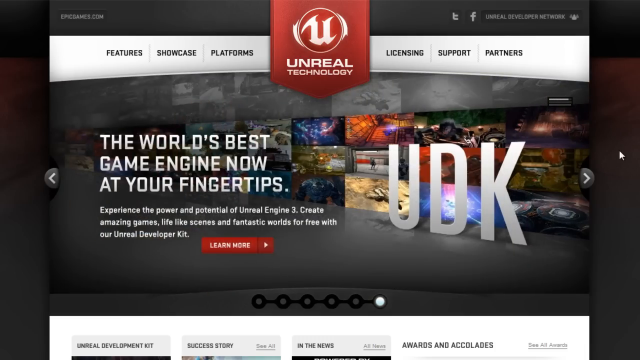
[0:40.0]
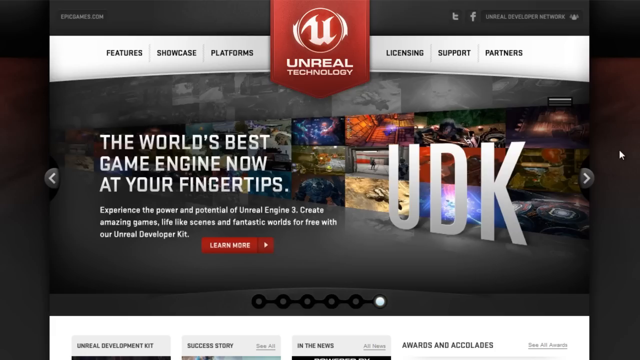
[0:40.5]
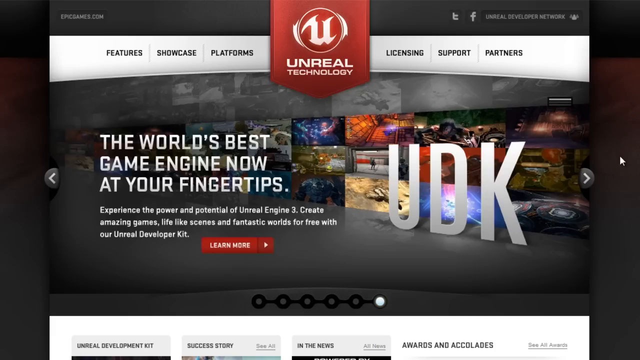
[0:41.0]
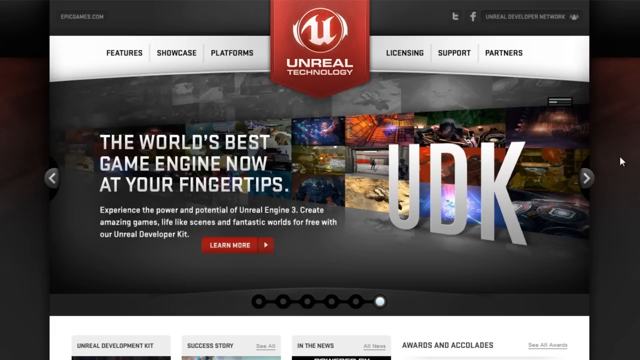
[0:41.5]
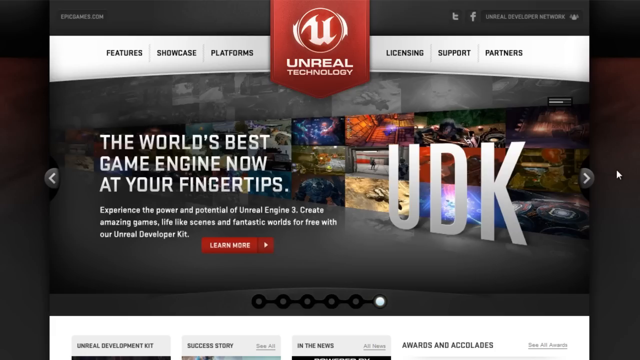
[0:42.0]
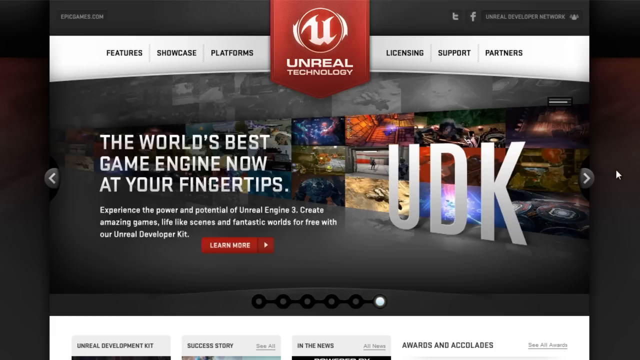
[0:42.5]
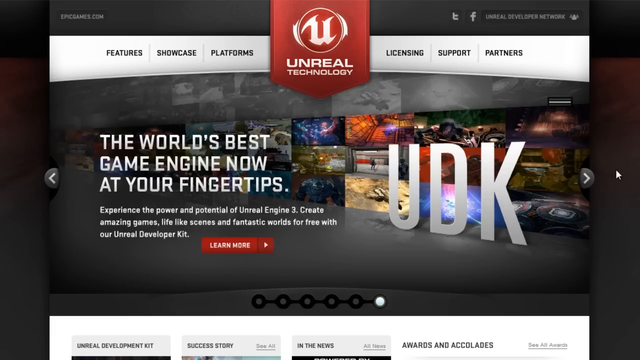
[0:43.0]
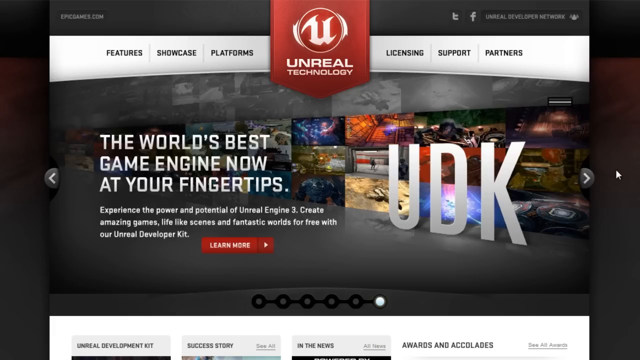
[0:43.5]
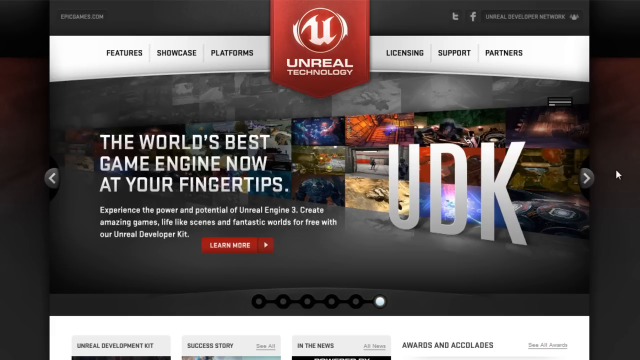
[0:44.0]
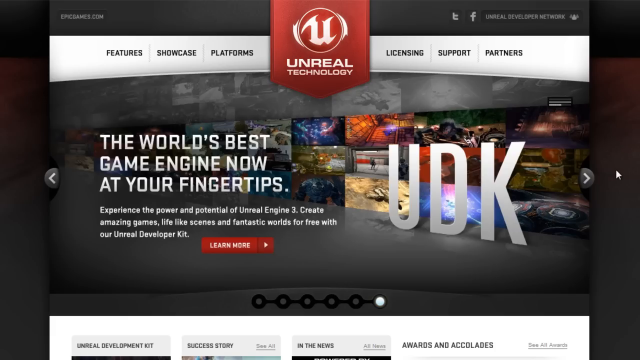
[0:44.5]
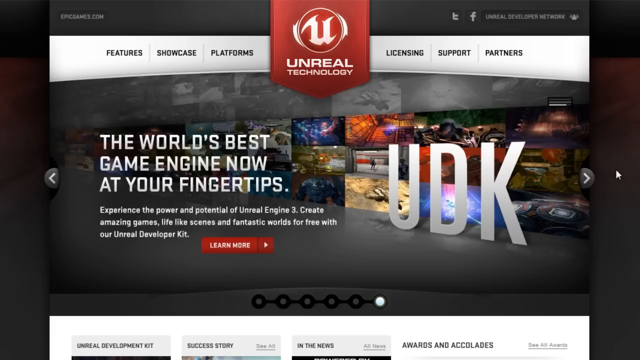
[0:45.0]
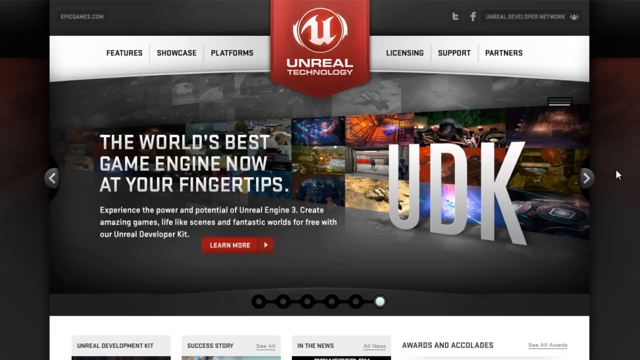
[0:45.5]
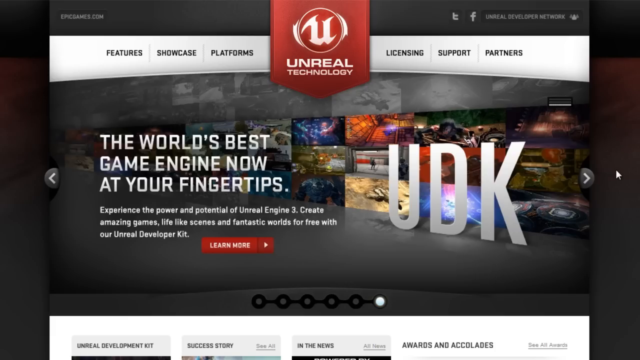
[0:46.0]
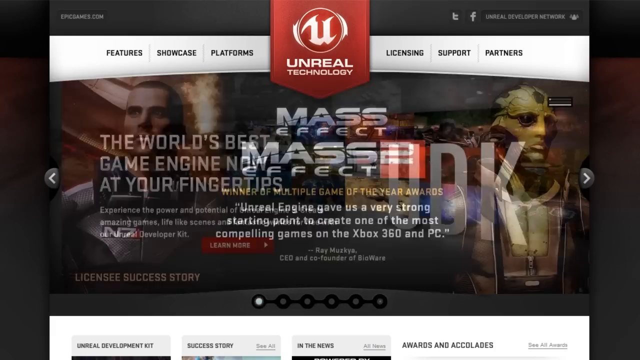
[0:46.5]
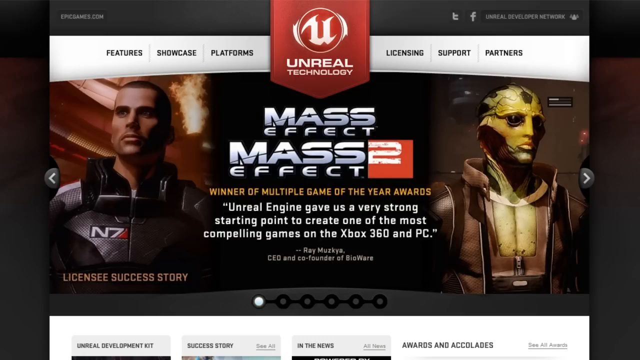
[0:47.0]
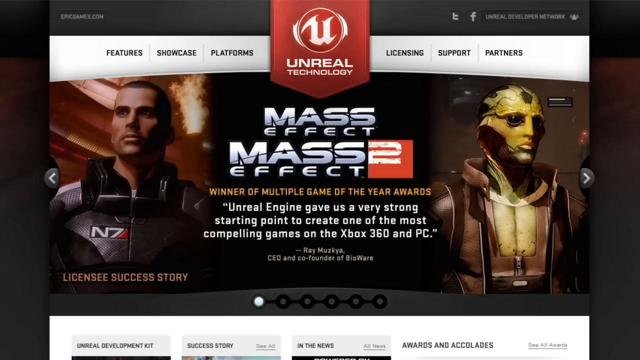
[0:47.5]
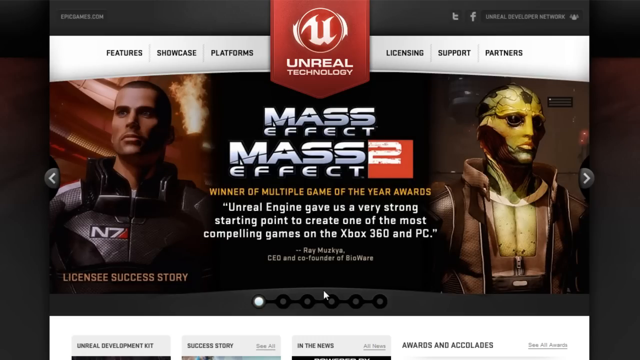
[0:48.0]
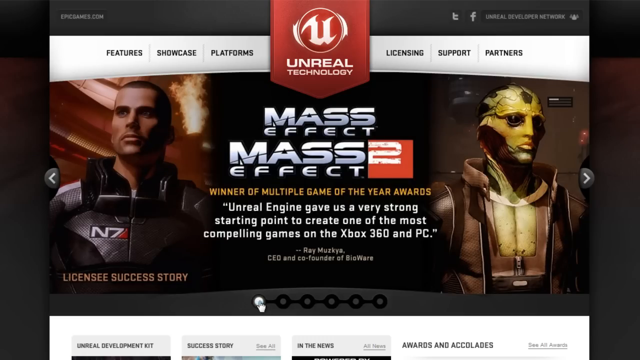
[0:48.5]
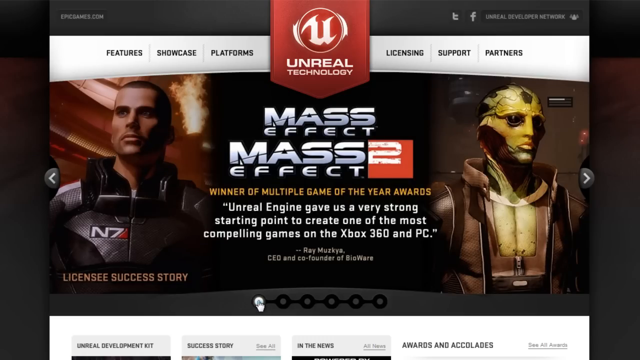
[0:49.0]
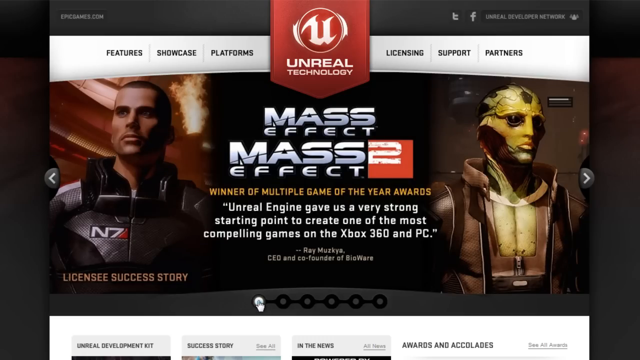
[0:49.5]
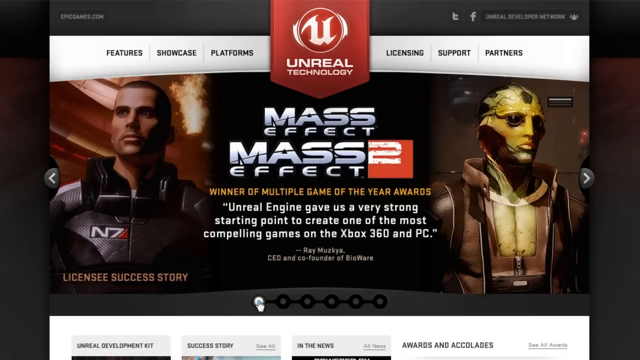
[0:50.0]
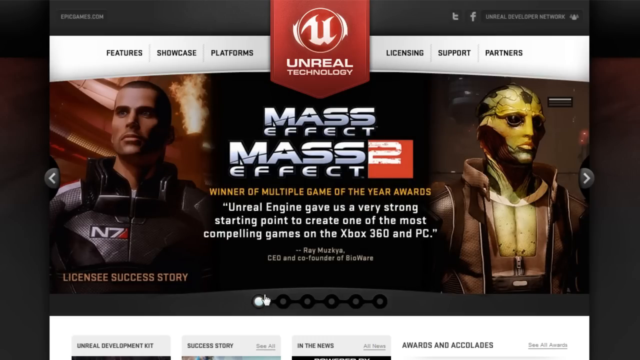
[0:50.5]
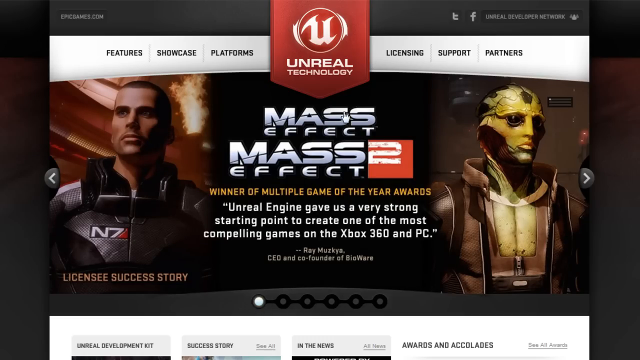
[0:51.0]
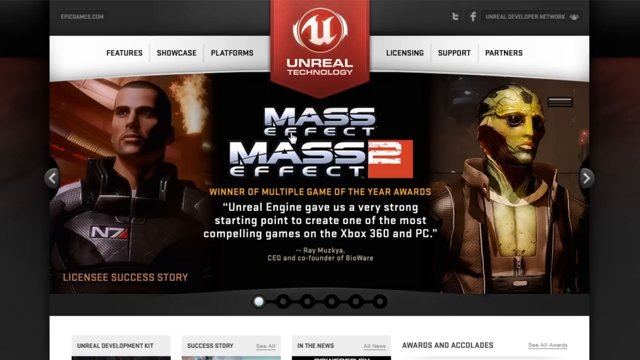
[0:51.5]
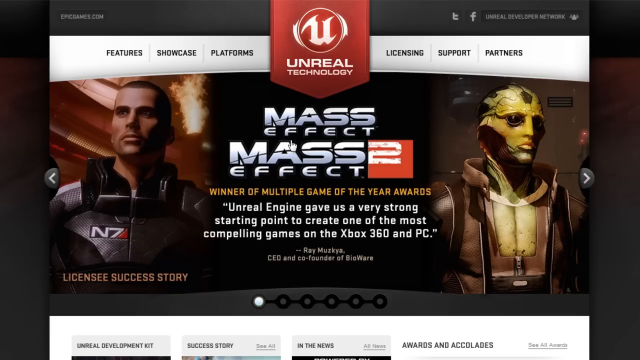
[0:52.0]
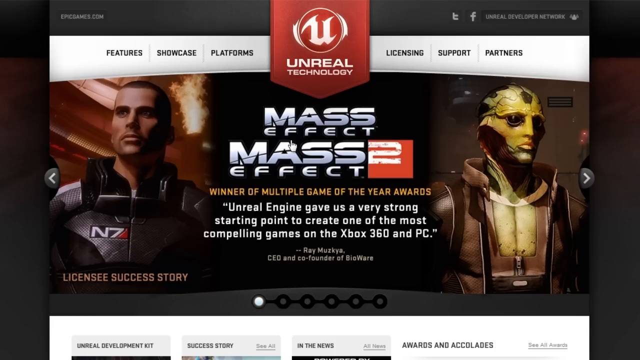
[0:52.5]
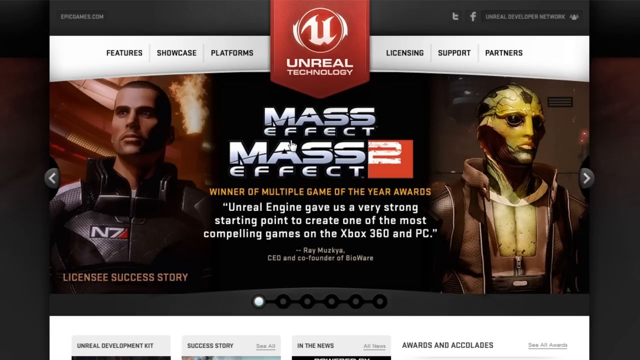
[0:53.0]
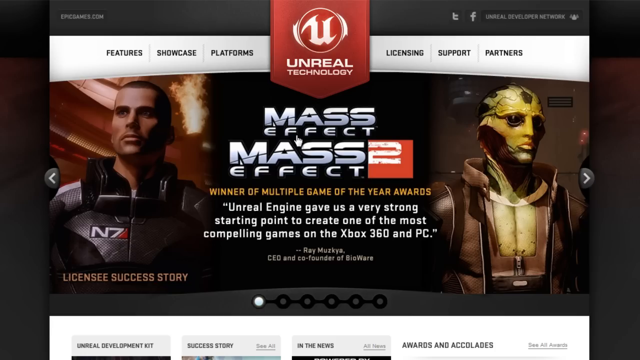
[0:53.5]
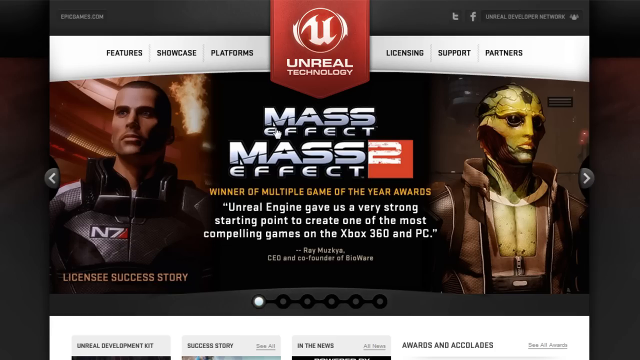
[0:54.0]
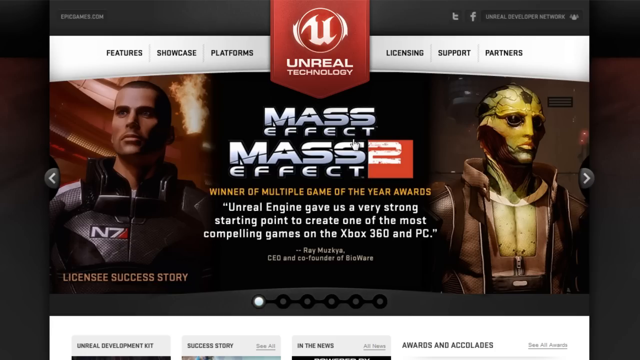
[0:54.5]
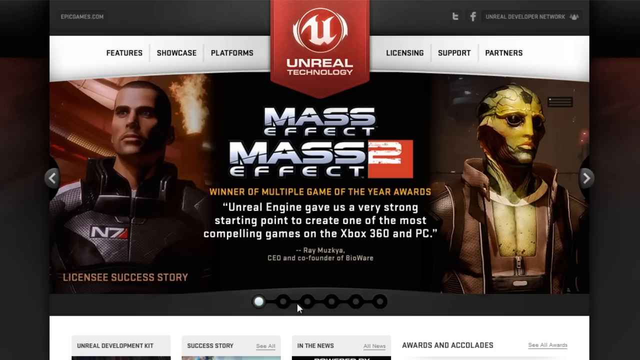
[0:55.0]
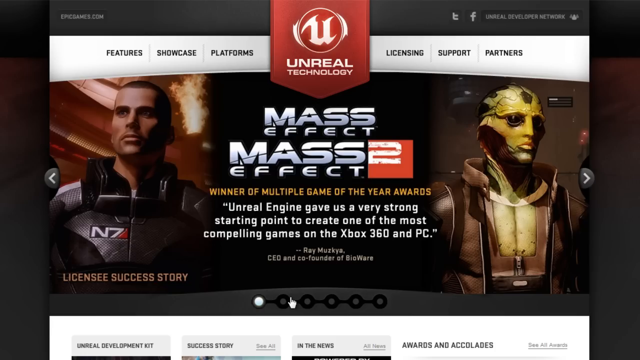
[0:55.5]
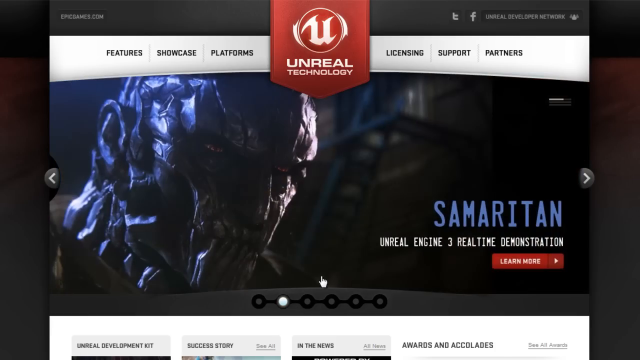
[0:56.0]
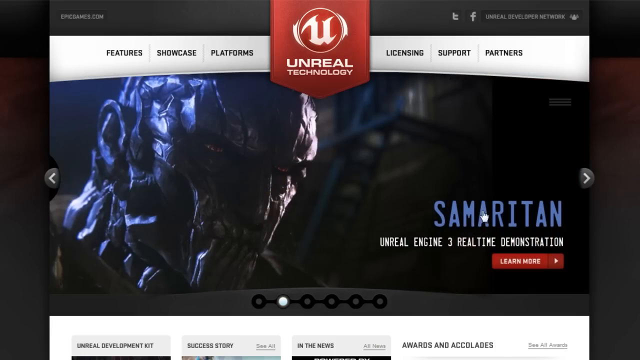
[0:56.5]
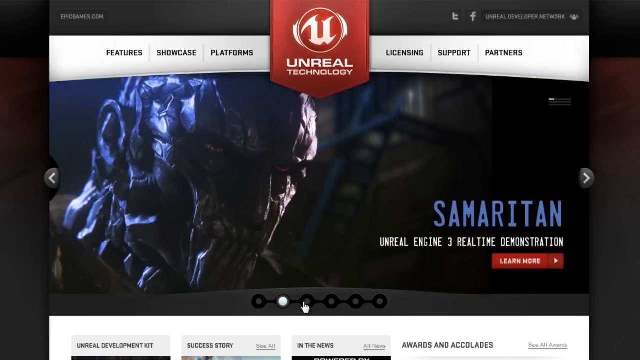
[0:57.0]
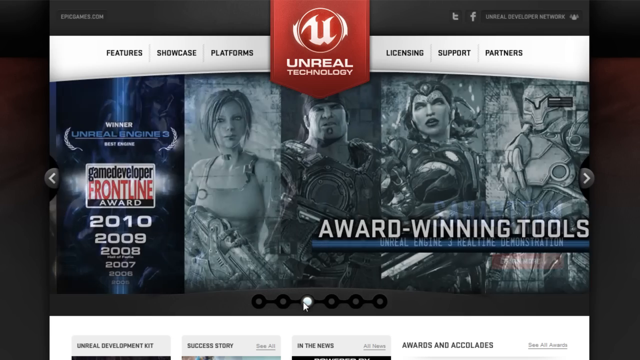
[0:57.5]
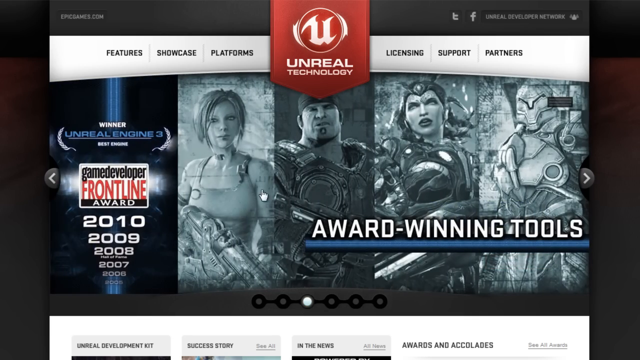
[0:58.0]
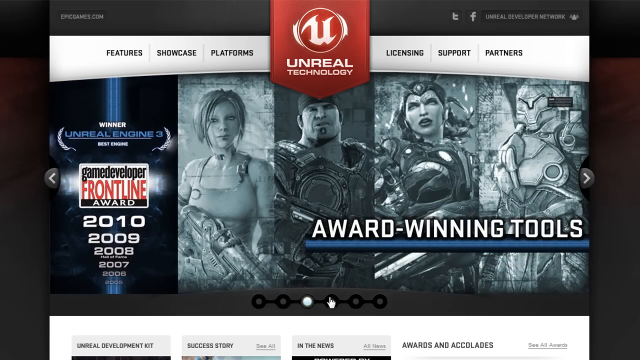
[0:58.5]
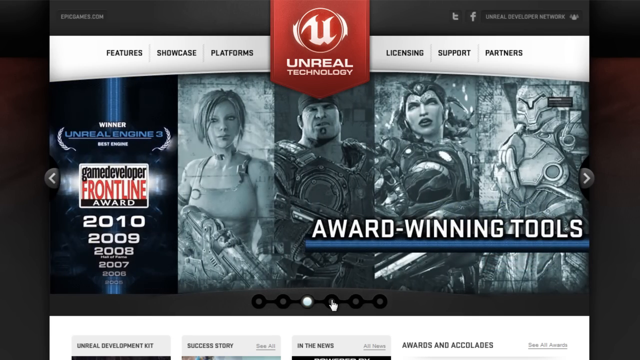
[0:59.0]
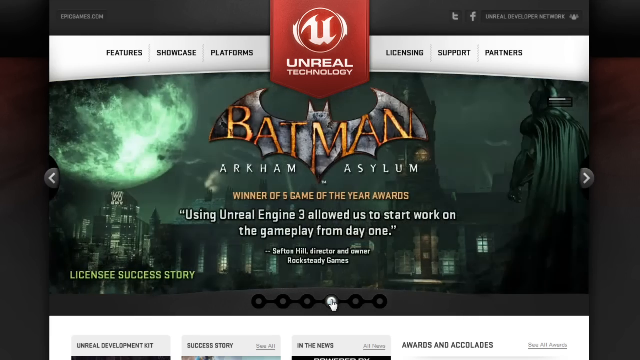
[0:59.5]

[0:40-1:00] The final slide is for something called UDK, on the right-hand side. To the left, multiple screens are placed directly together, apparently each showing different gameplay, with big white text over them reading "UDK". On the left in white capital letters it says "the world's best game engine now at your fingertips", and underneath in smaller white writing it says "experience the power of potential of Unreal Engine 3 create amazing games lifelike scenes and fantastic worlds for free with our Unreal Developer Kit", followed by "learn more" in red. The slideshow goes back to the start with the Mass Effect and Mass Effect 2 slide, and the person recording the screen moves the mouse, scrolling over the various texts on the screen and clicking through all of the tabs.